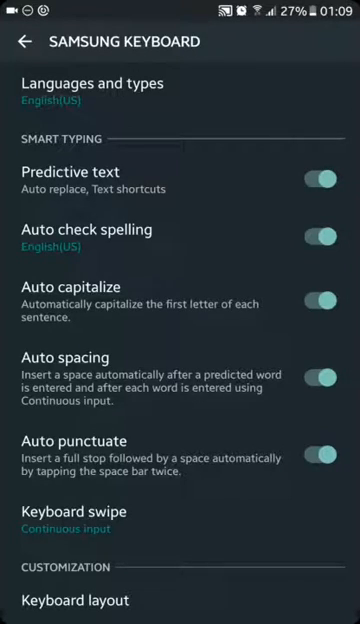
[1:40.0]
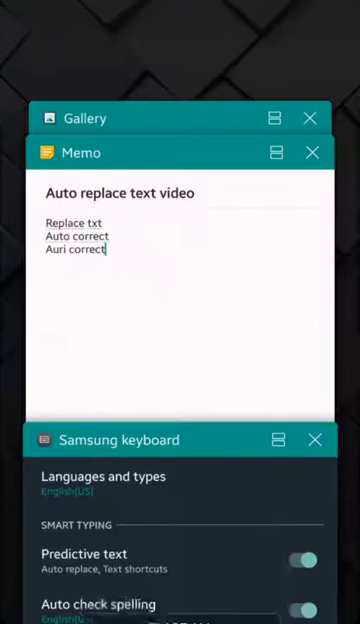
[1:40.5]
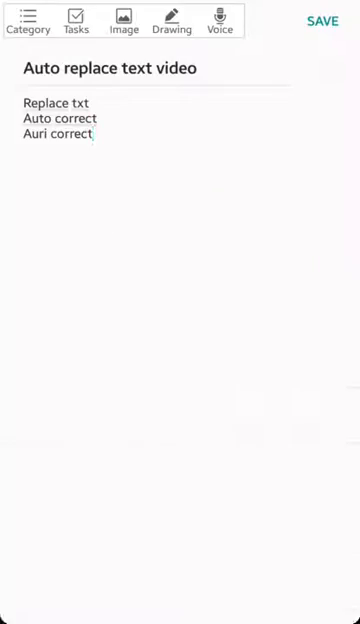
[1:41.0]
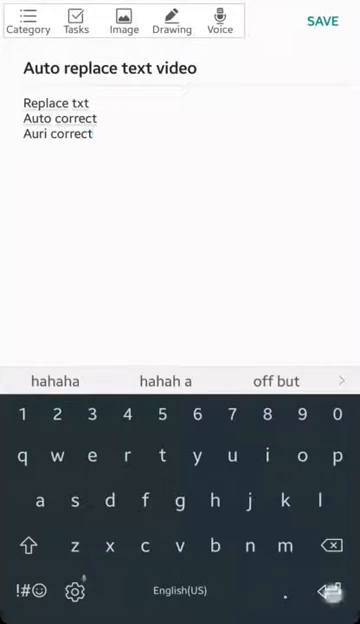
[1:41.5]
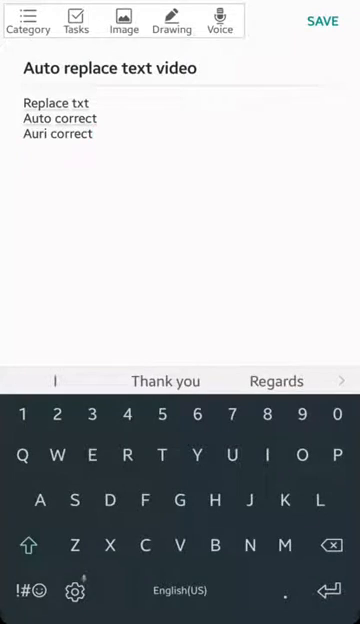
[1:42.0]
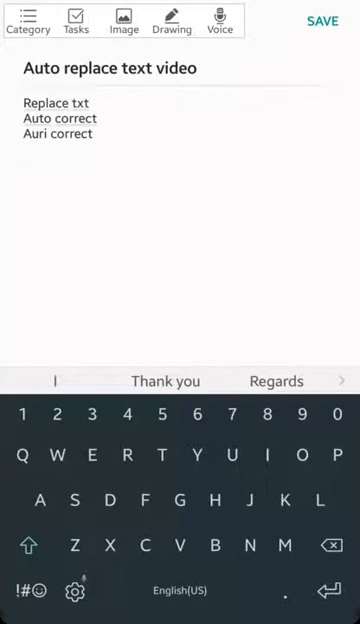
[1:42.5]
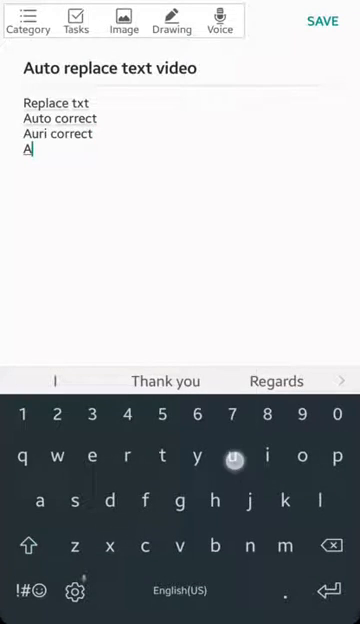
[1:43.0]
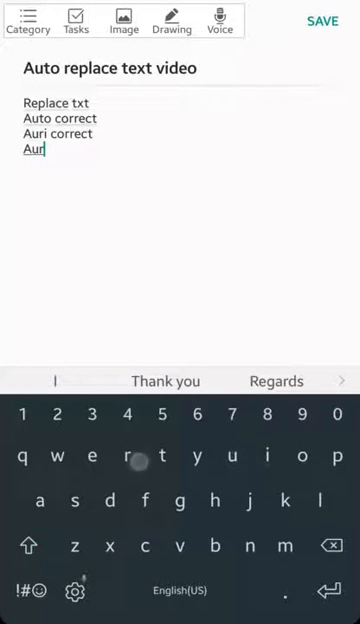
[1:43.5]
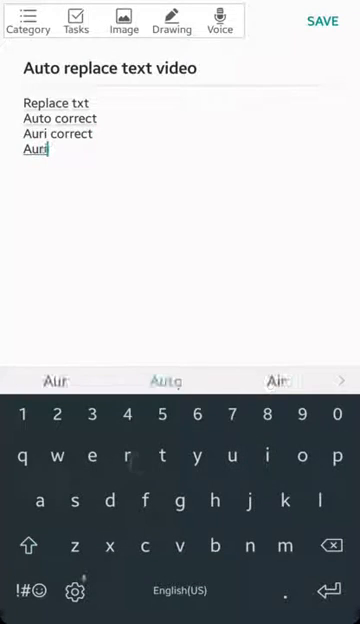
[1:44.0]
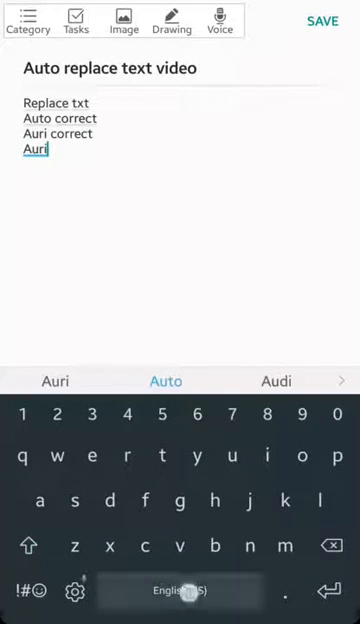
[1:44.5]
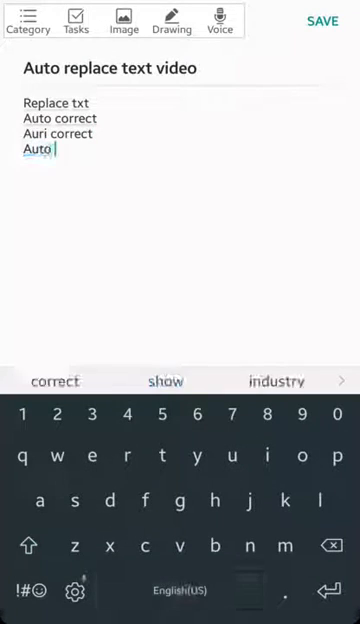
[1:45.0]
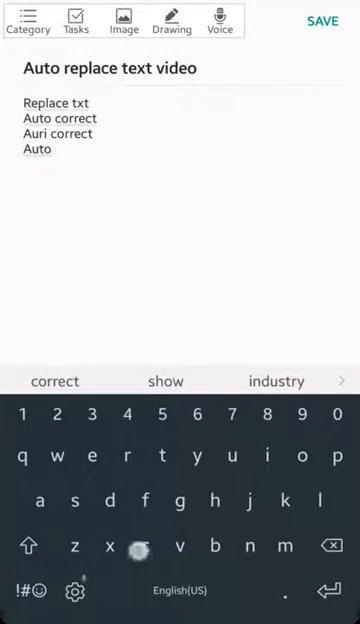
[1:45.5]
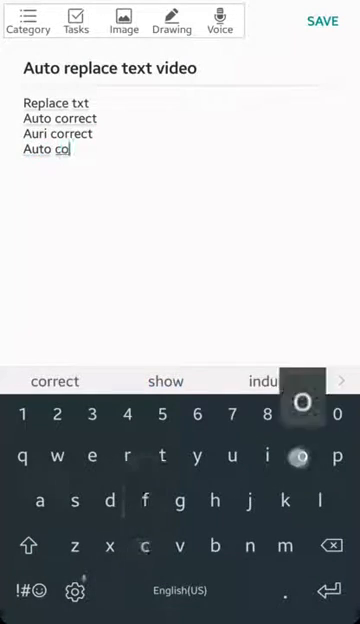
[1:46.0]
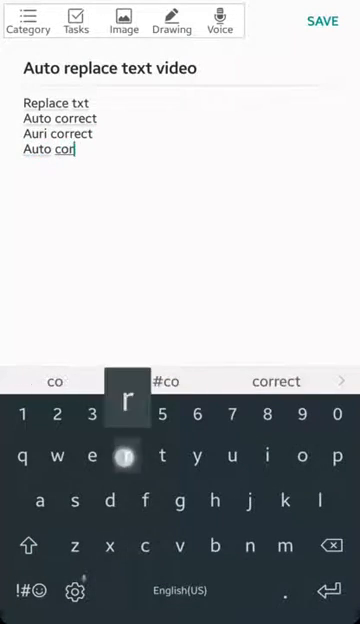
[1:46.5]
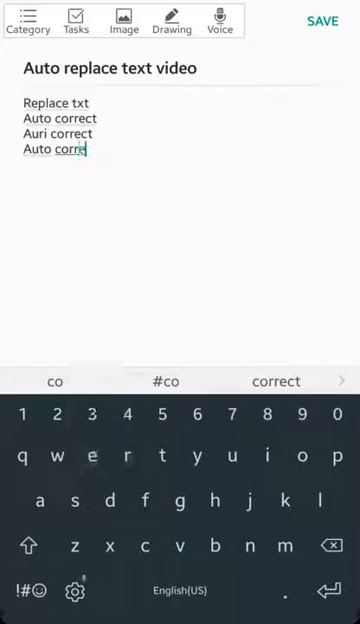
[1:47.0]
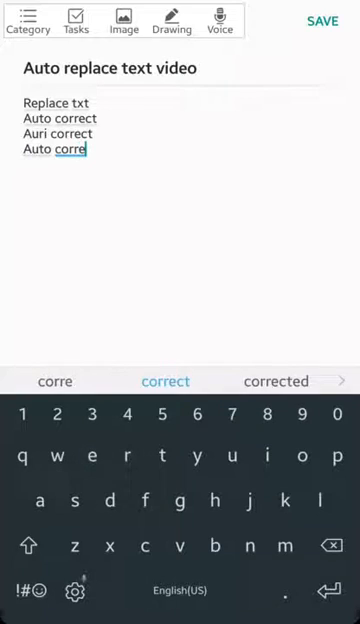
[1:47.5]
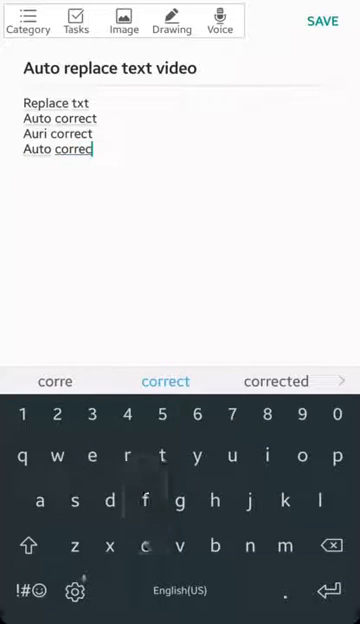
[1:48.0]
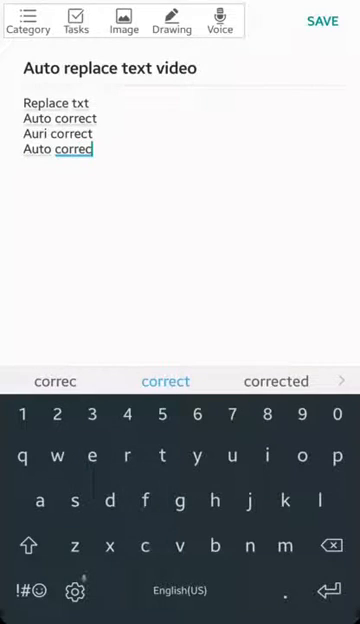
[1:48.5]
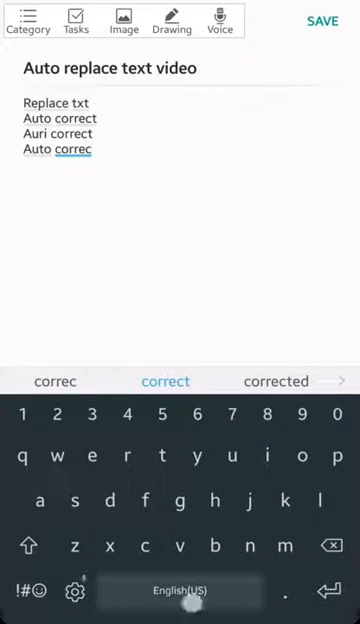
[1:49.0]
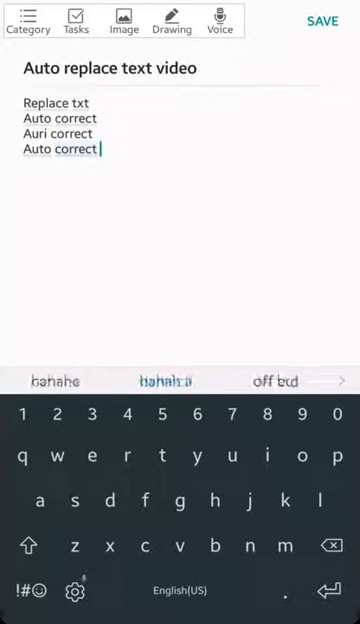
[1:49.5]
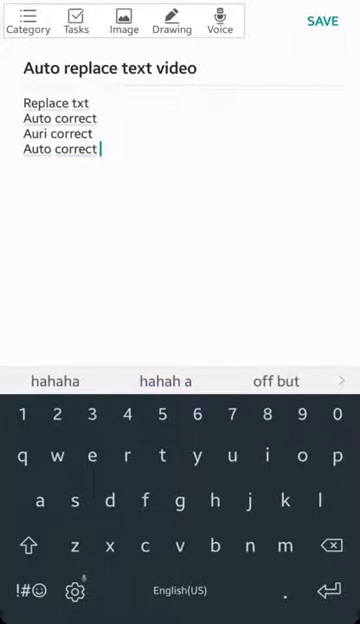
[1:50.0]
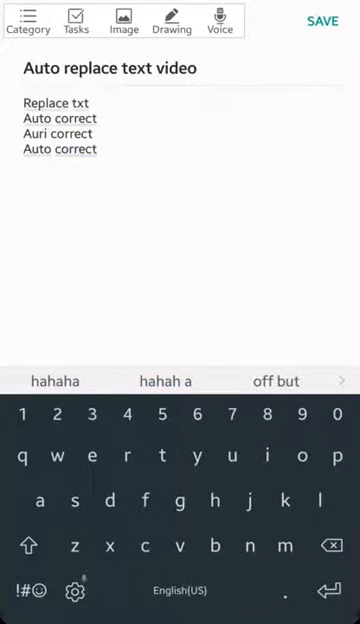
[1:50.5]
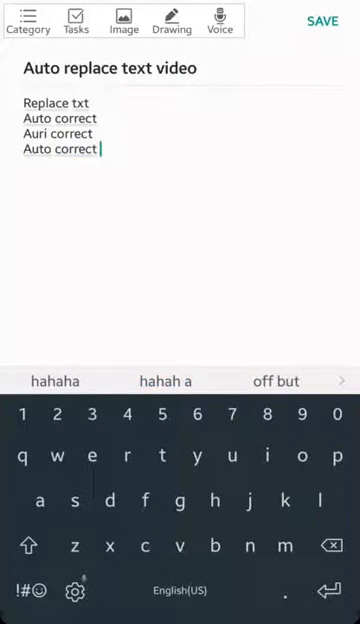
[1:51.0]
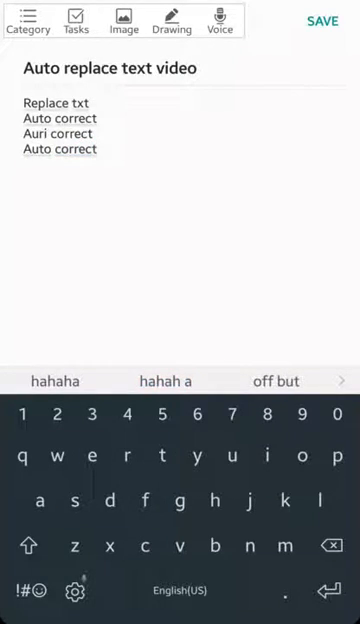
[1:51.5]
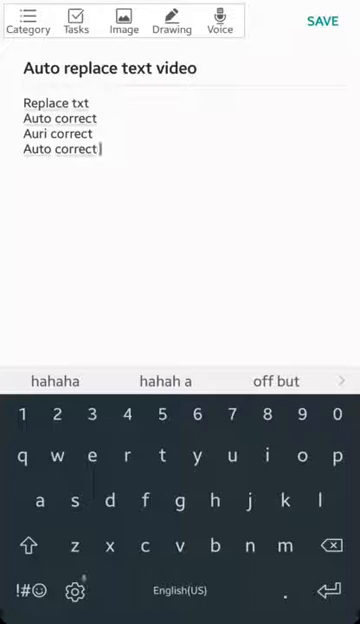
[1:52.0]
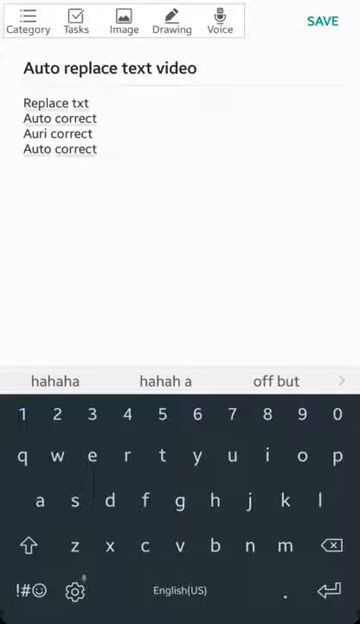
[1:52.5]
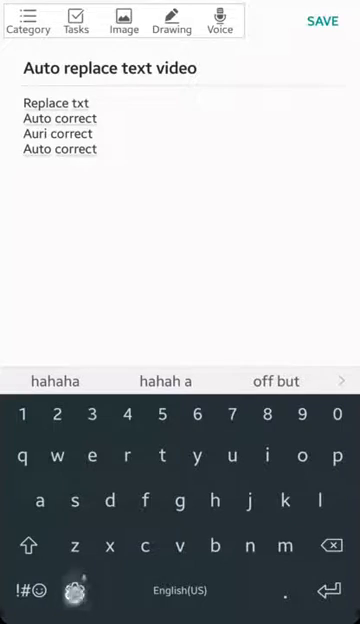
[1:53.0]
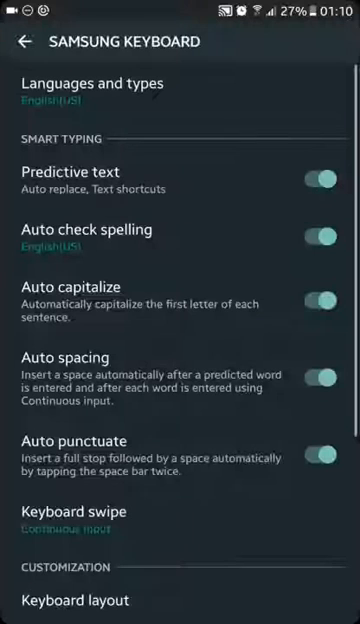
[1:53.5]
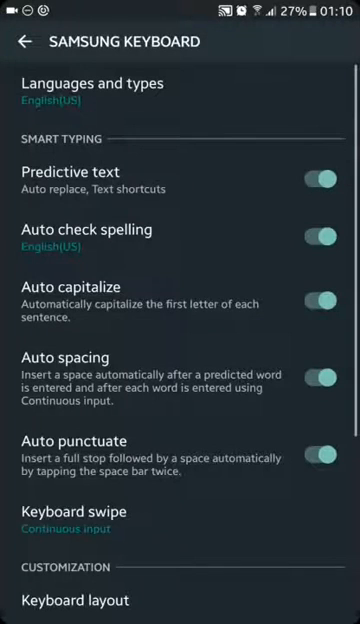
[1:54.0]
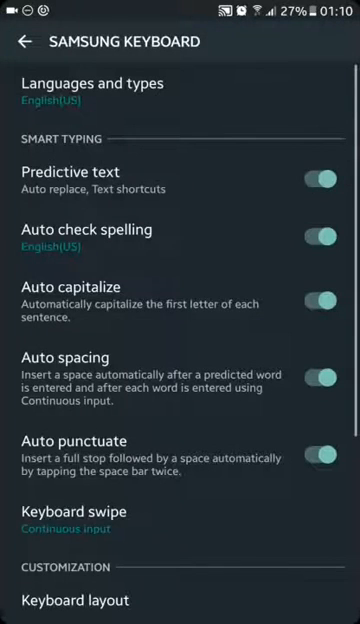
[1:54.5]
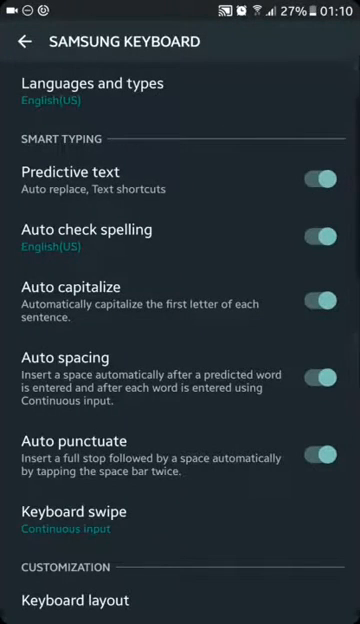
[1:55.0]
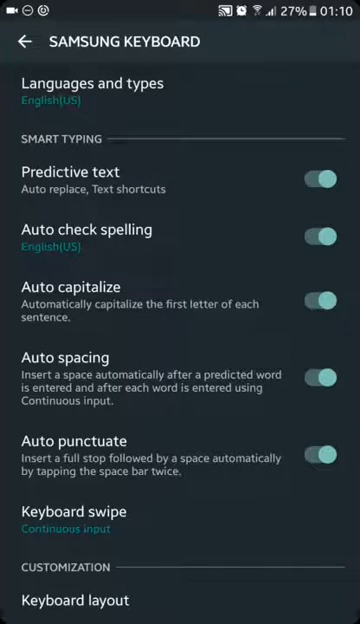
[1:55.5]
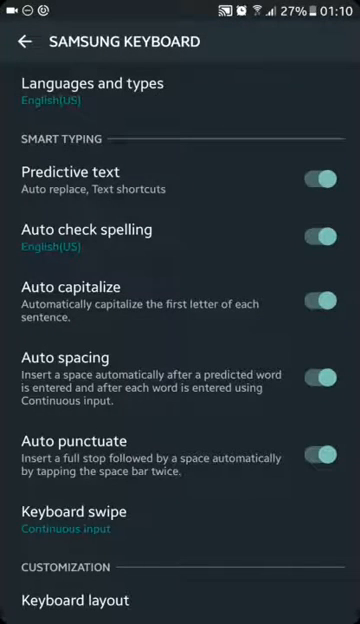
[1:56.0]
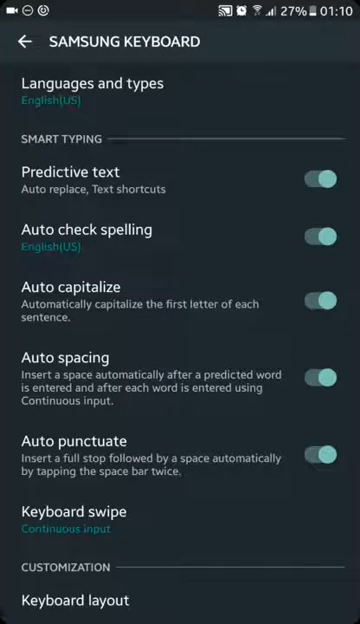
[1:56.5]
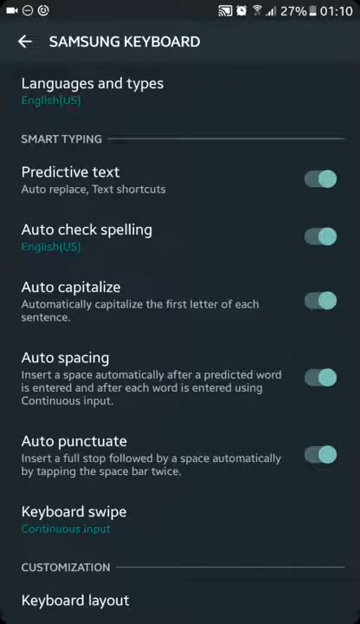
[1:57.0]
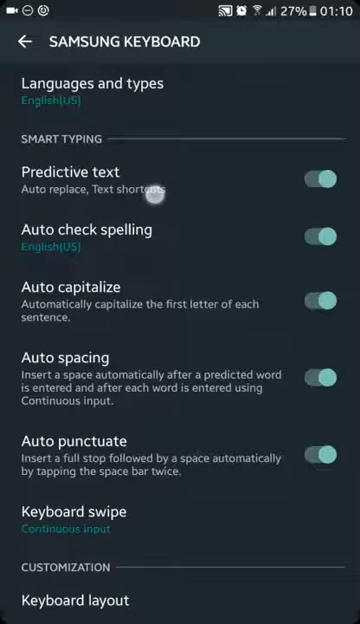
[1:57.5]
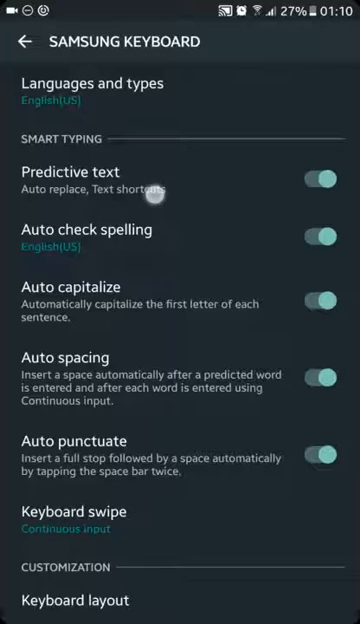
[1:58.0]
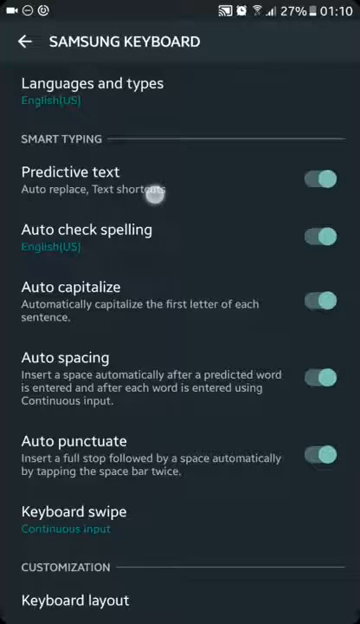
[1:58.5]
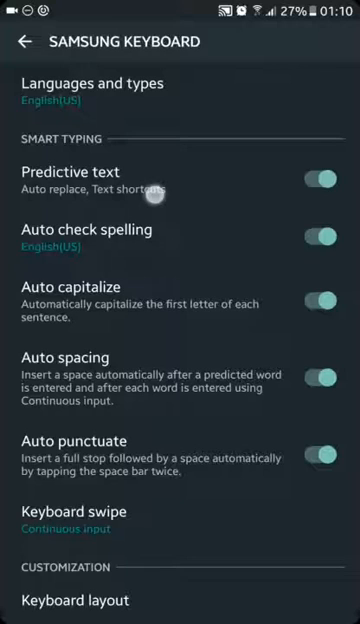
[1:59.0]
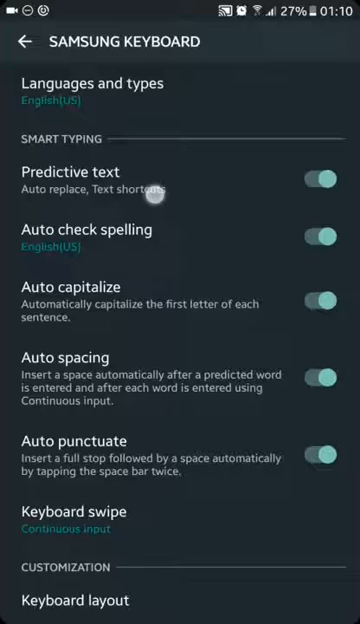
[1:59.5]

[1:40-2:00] The memo screen shows three terms typed in the field. The user types another term below them, "auto" and then "correct," so "auto correct" appears right under "re correct." The phone keyboard is still at the bottom of the screen, and the same five category tabs remain at the top. The user switches back to the Samsung keyboard settings, where all five toggle buttons look like they are still on. Within the smart typing section, the only category without a toggle button is keyboard swipe, and below it is "continuous input" in green text. The Samsung keyboard background is black. Right at the end, the user looks like they click predictive text.